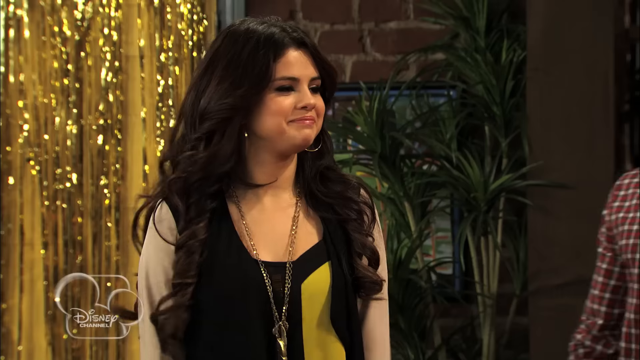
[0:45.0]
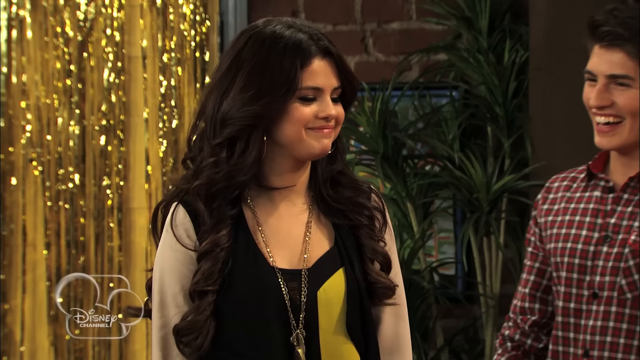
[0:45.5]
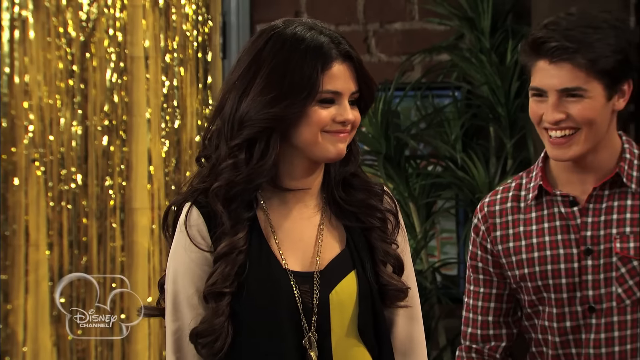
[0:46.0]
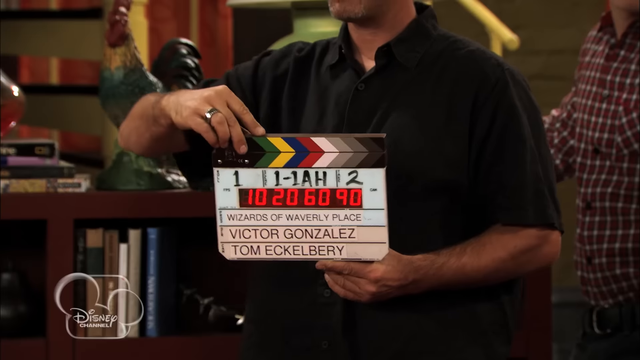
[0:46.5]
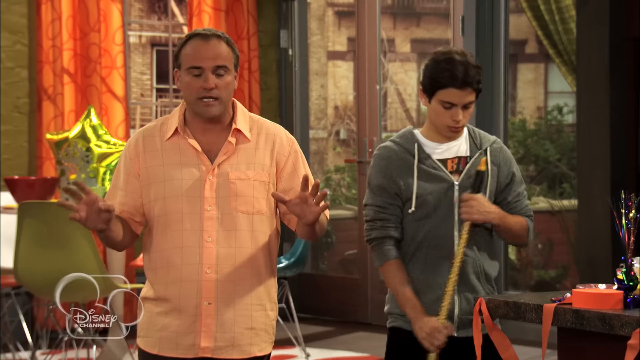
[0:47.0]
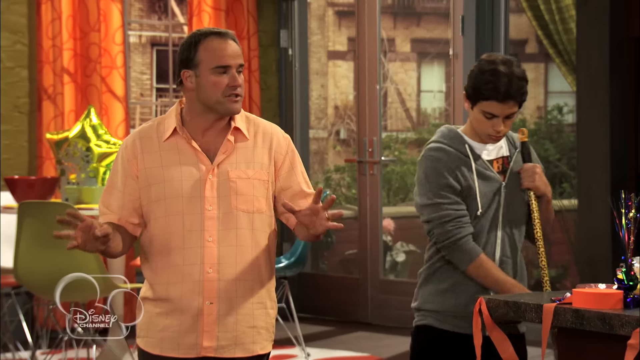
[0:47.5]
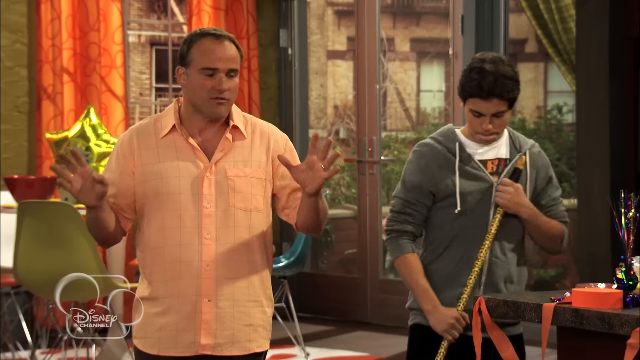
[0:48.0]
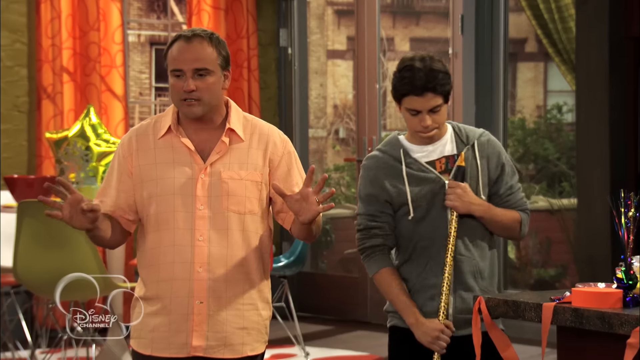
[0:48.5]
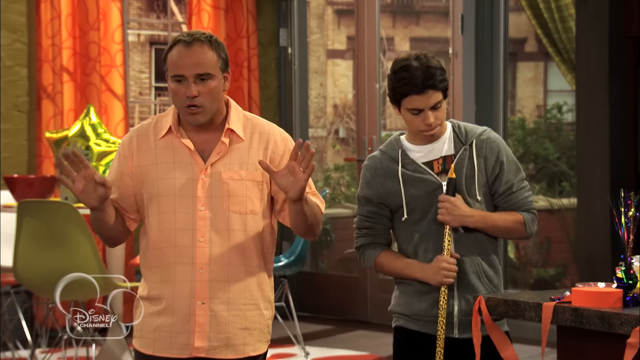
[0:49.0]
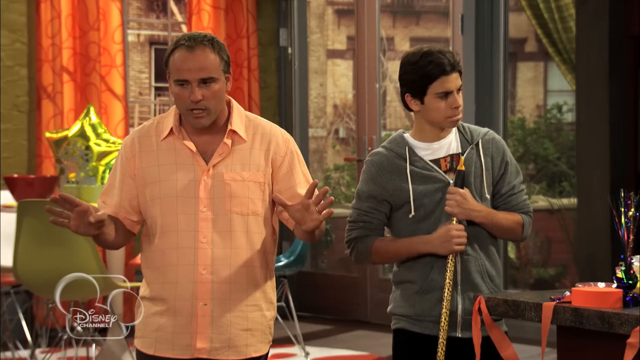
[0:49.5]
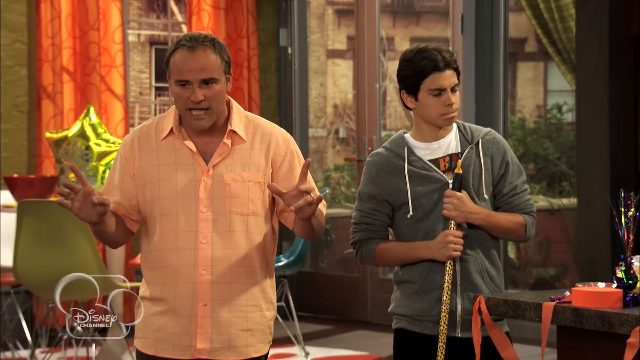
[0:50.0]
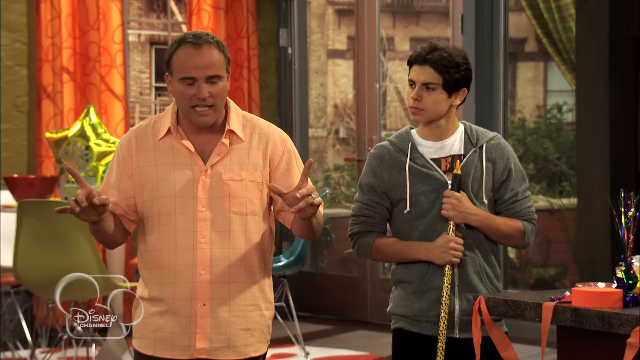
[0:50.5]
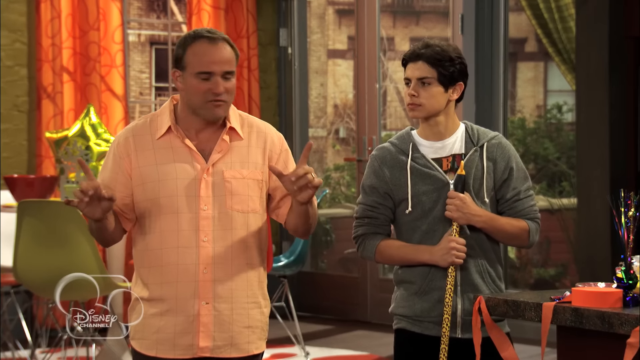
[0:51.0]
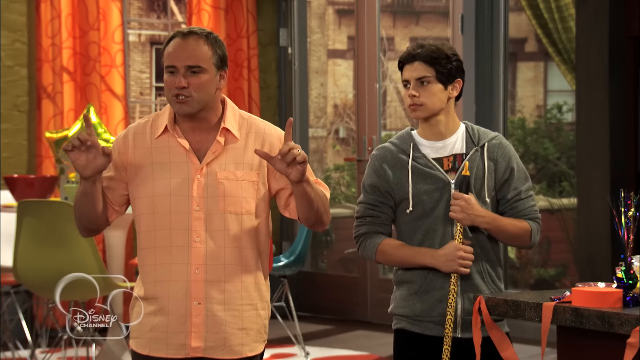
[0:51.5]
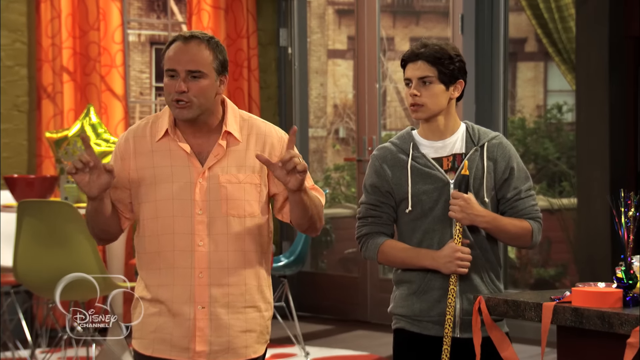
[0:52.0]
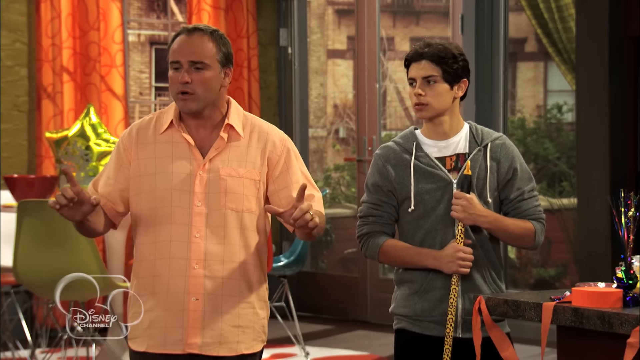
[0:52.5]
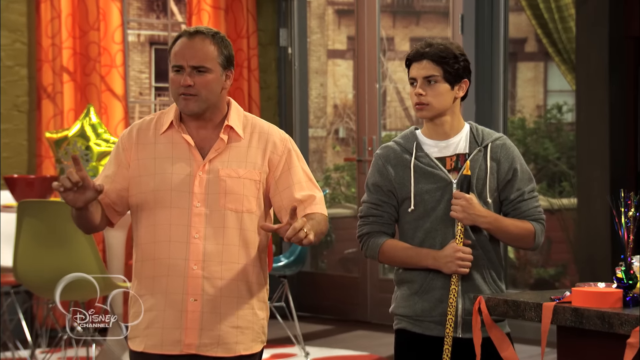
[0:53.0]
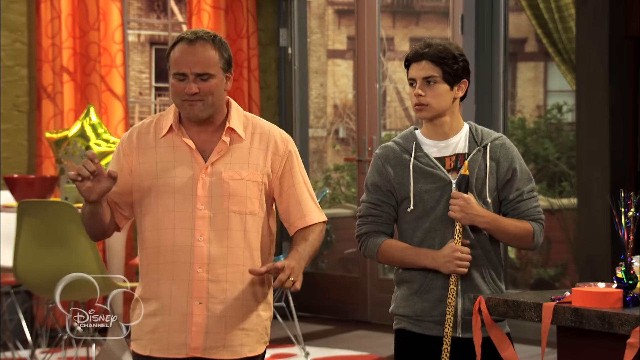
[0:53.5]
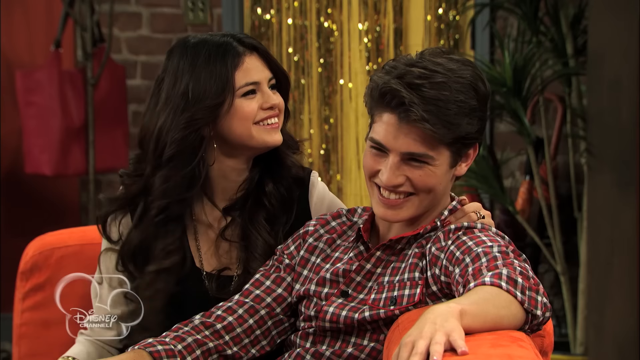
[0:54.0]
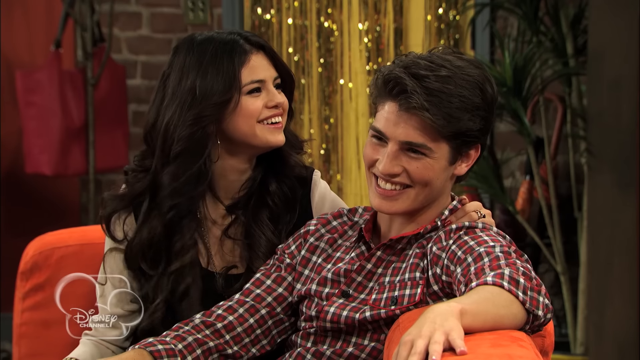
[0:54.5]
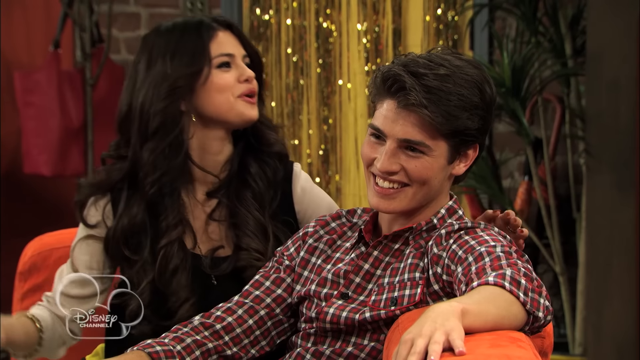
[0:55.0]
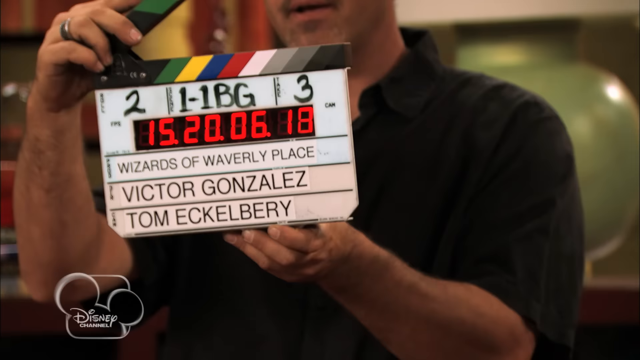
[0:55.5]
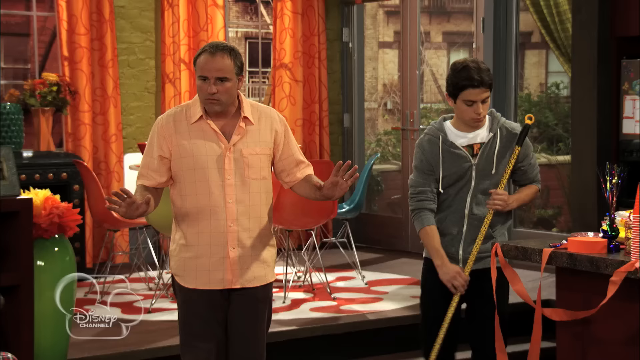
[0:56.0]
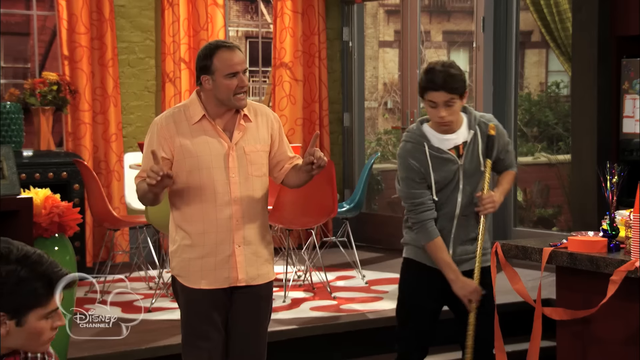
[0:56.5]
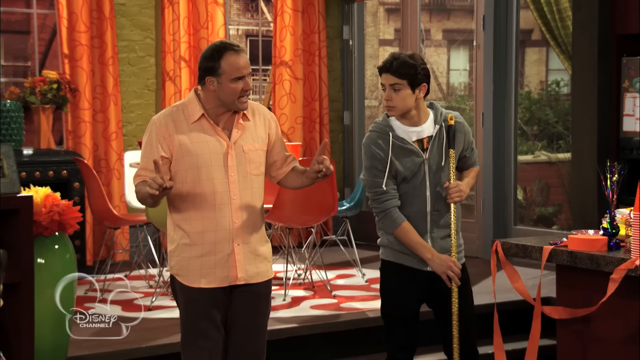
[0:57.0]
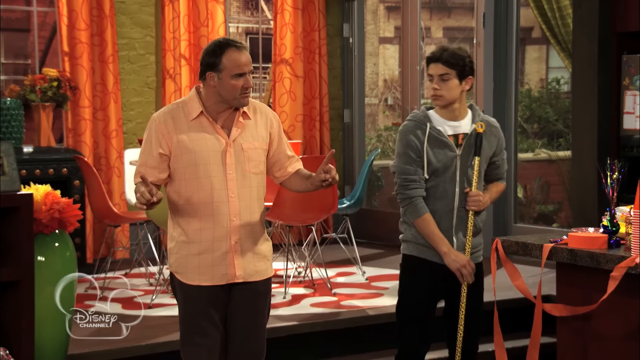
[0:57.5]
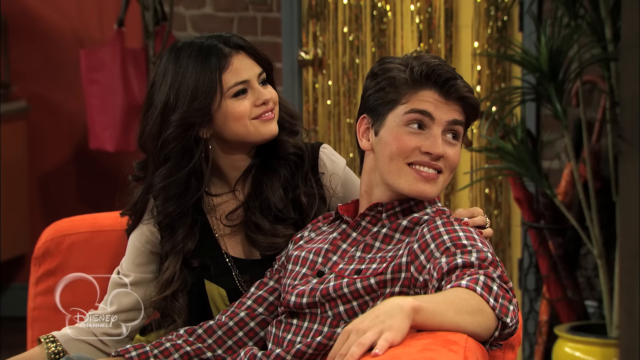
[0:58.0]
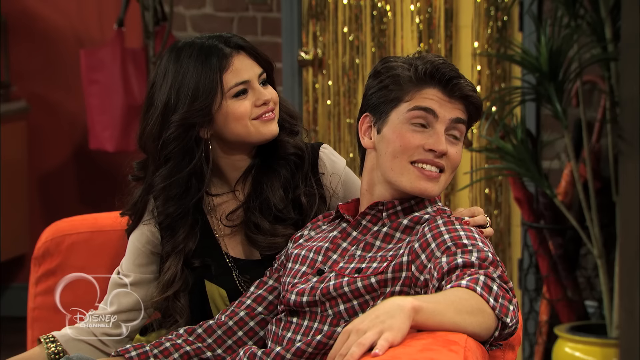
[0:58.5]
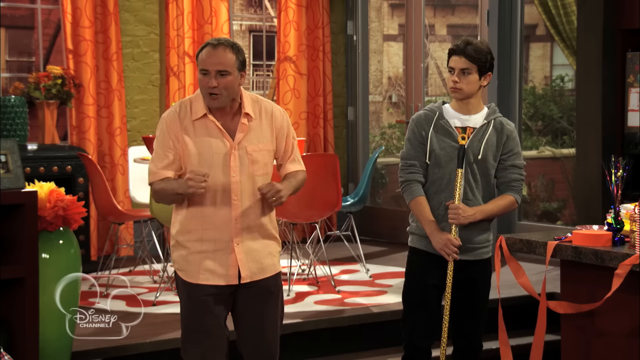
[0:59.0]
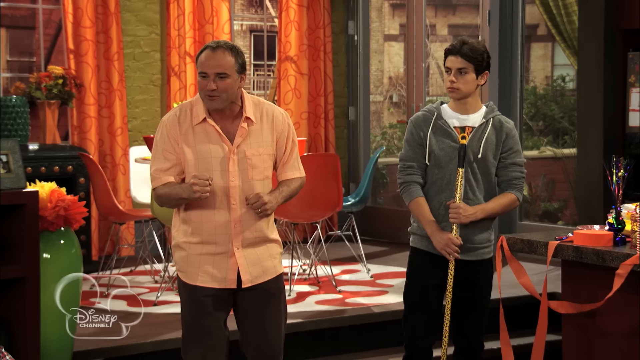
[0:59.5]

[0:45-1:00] The girl with black hair is seen from the front, with the boy in the checkered shirt to her right. There is a gold background on the left side and some plants between the two characters. After a quick action cutscene, the man in the orange collared shirt is on the left-hand side and a boy in a gray jacket is on the right-hand side. The boy looks like he is sweeping, and the man is talking and using hand motions, with both index fingers pointed upwards. They are inside, and the background appears to have windows showing the outside. The camera cuts to the girl with black hair and the boy in the checkered shirt. The girl turns back to speak to the man while laughing. The man turns to the kid in the gray jacket with both fingers still up and starts saying something. The two characters sitting down start smiling, and the camera goes back to the man, who closes both fists and looks like he is excited about something.